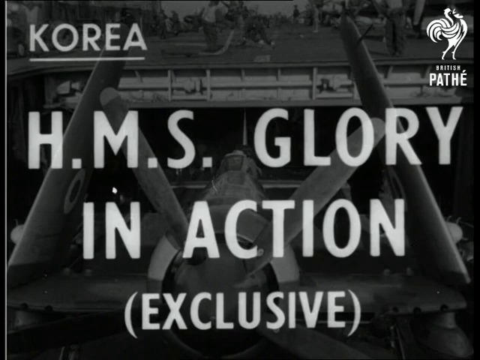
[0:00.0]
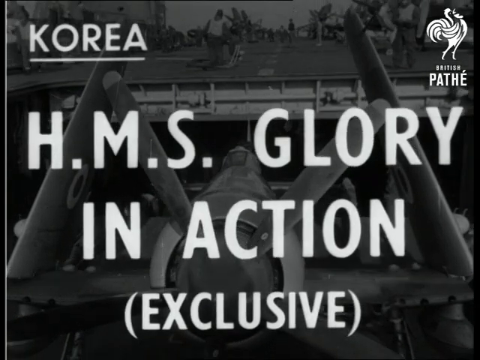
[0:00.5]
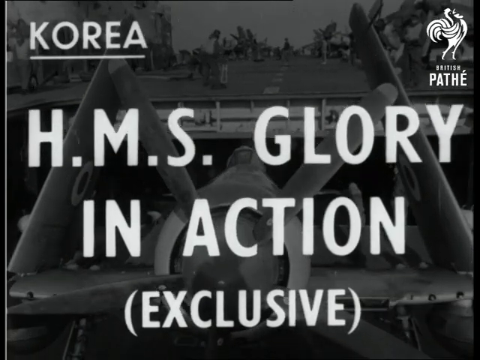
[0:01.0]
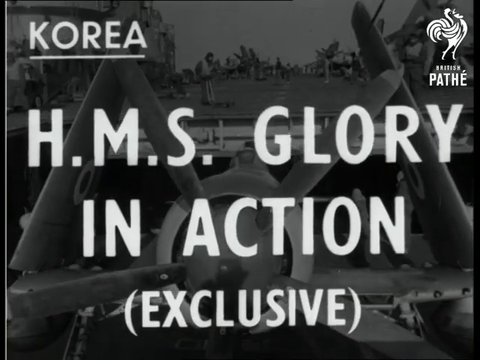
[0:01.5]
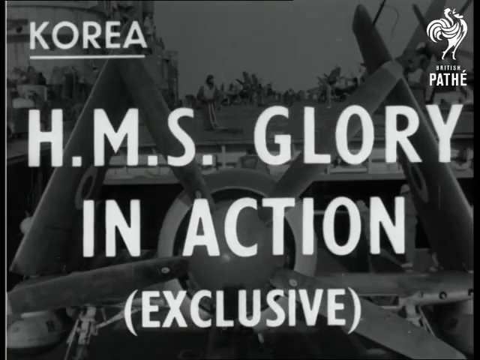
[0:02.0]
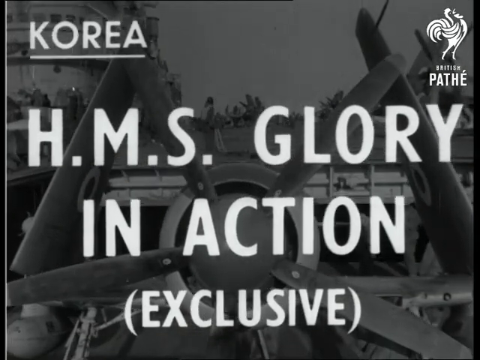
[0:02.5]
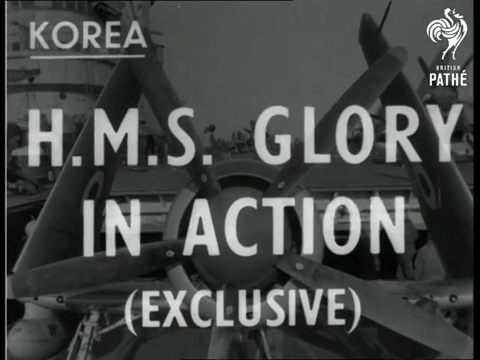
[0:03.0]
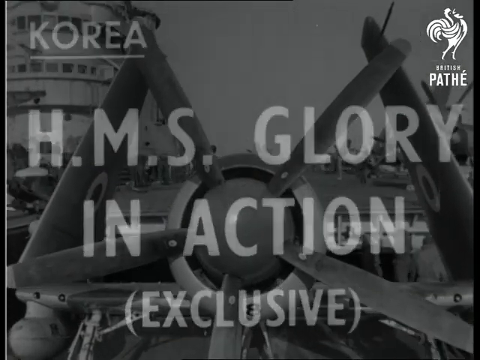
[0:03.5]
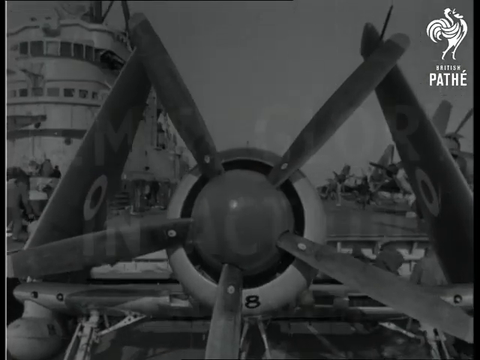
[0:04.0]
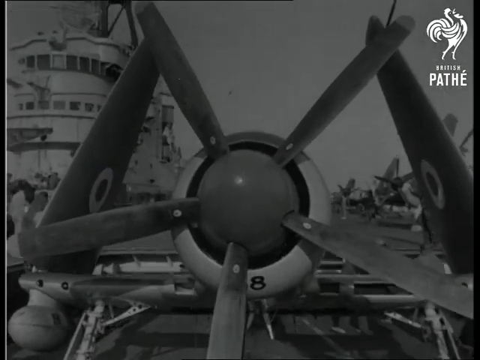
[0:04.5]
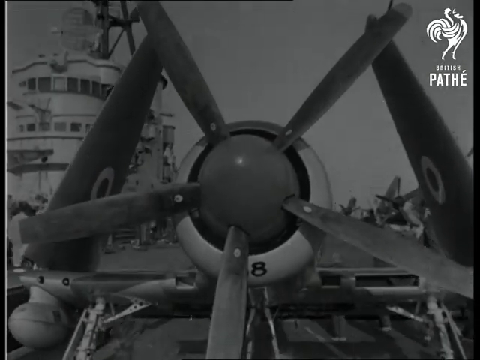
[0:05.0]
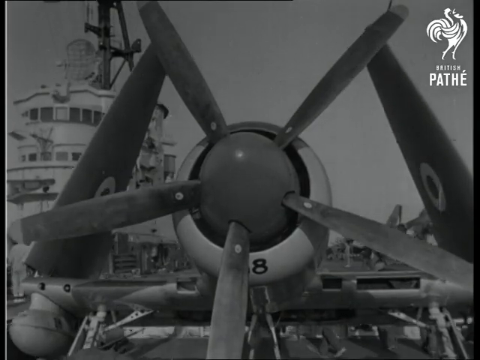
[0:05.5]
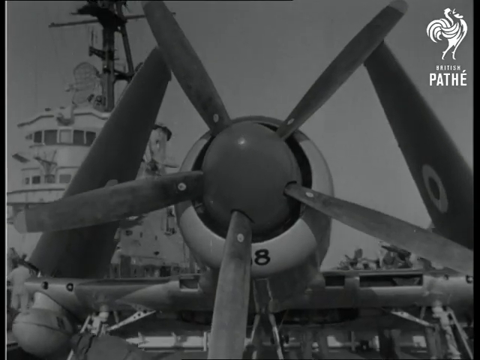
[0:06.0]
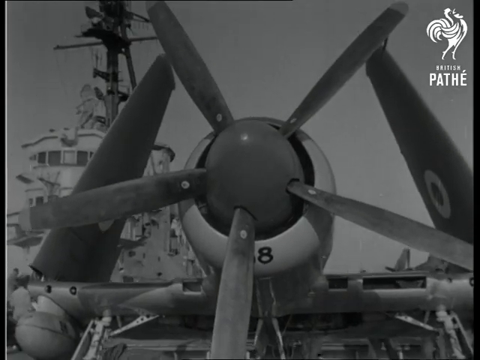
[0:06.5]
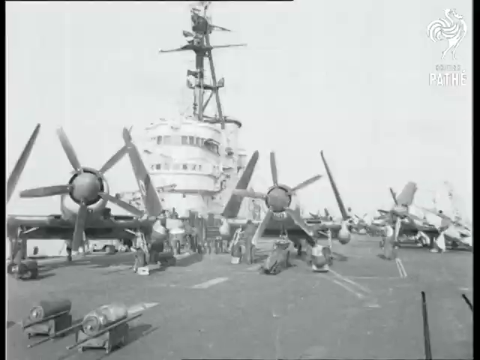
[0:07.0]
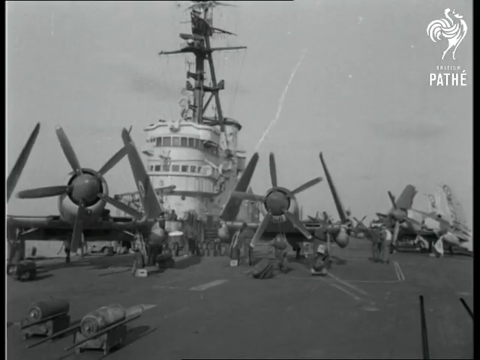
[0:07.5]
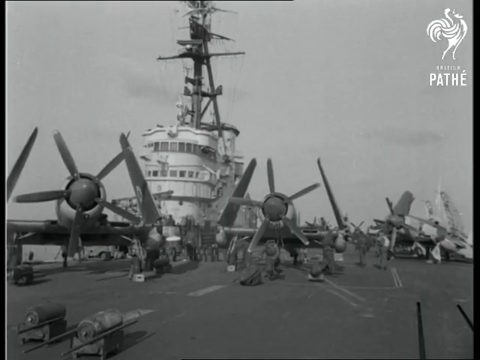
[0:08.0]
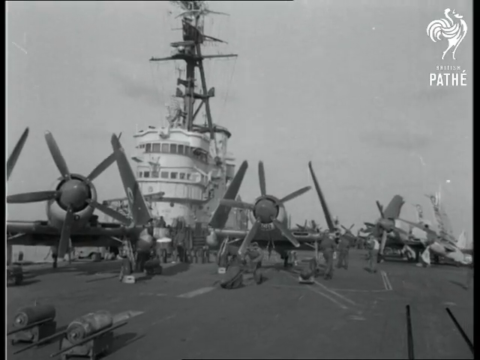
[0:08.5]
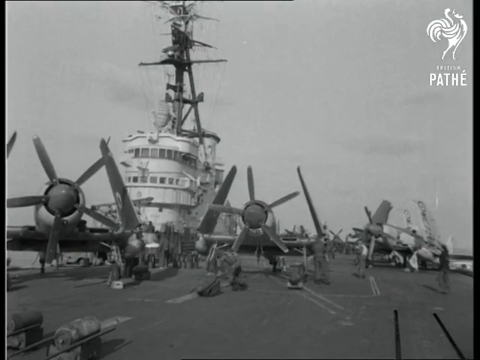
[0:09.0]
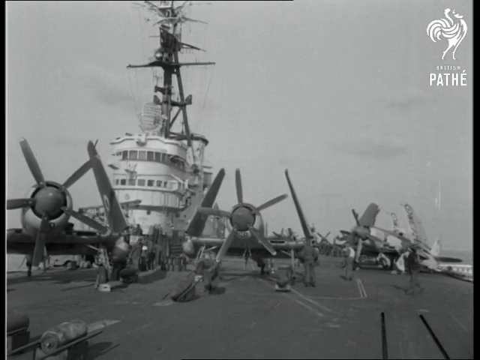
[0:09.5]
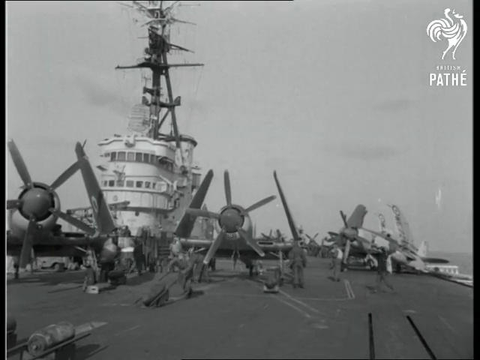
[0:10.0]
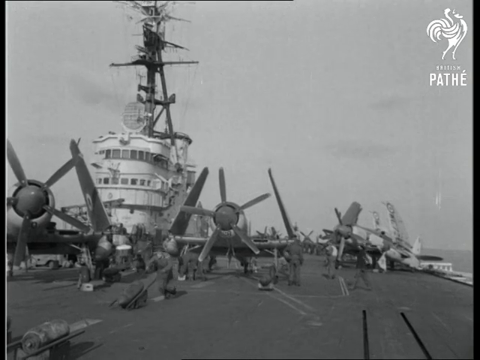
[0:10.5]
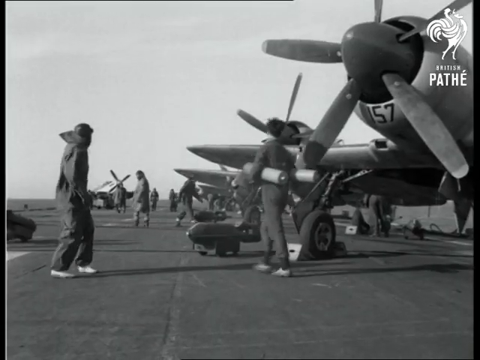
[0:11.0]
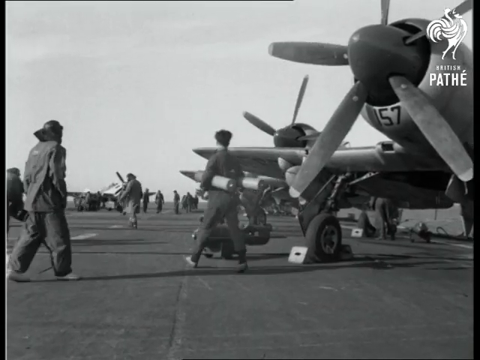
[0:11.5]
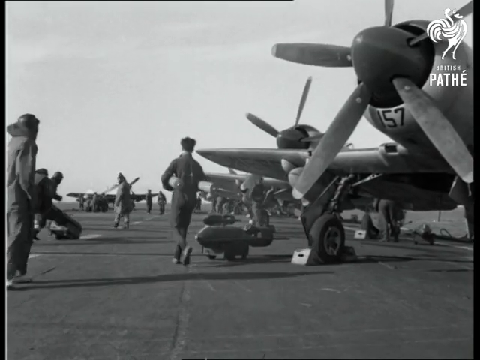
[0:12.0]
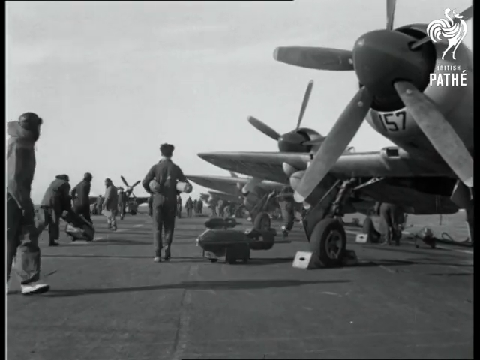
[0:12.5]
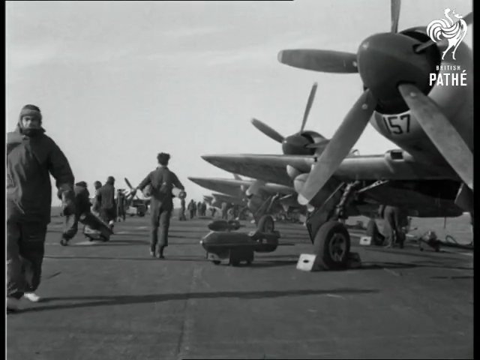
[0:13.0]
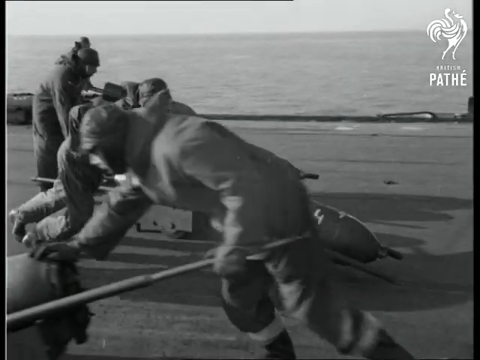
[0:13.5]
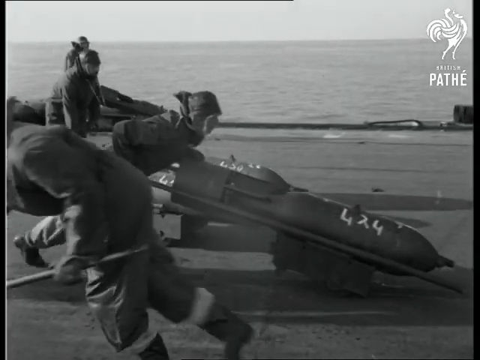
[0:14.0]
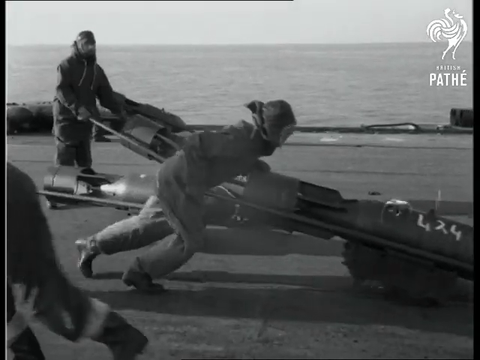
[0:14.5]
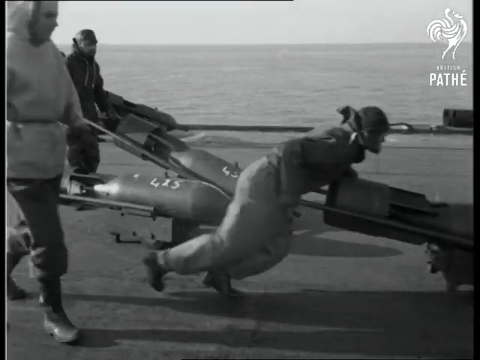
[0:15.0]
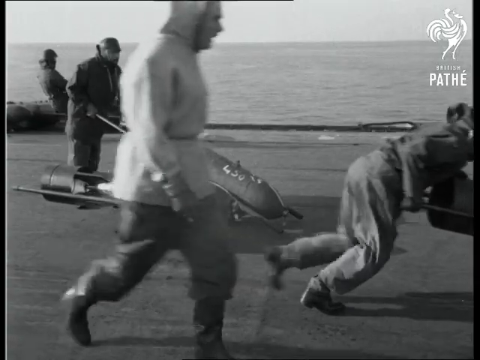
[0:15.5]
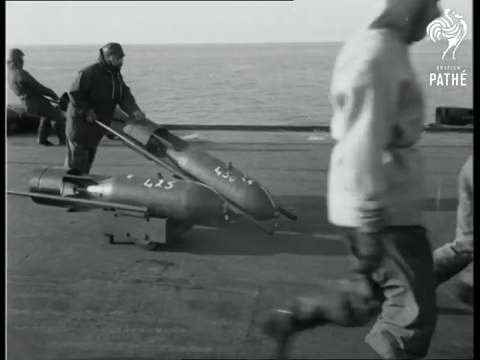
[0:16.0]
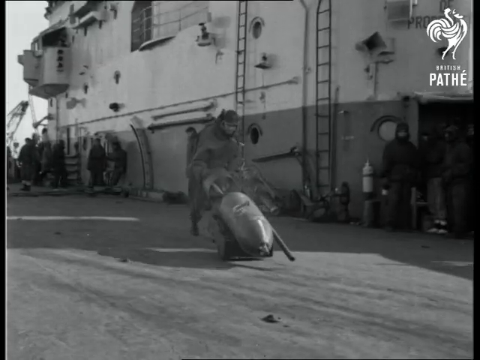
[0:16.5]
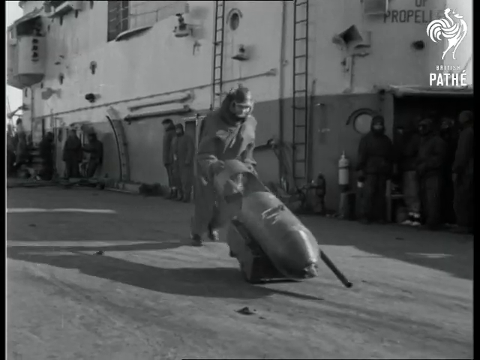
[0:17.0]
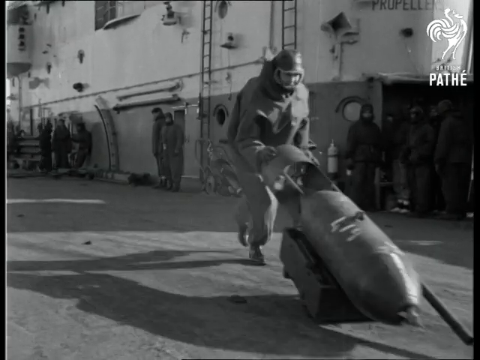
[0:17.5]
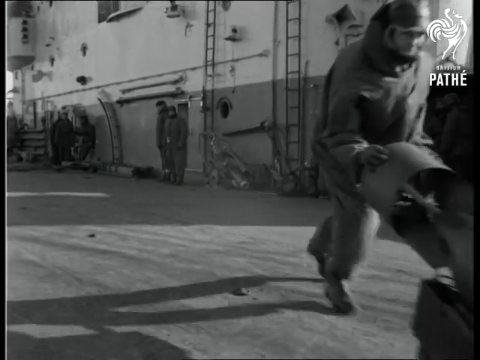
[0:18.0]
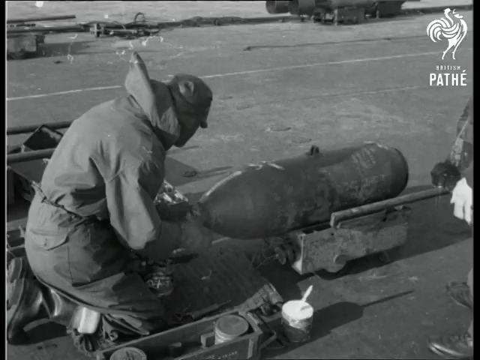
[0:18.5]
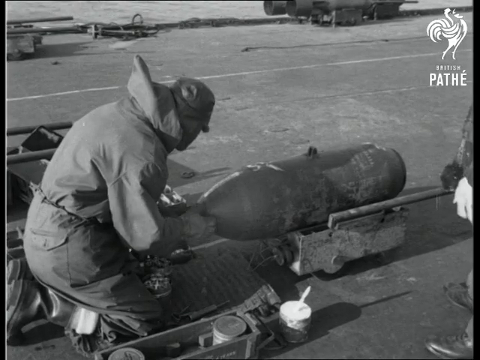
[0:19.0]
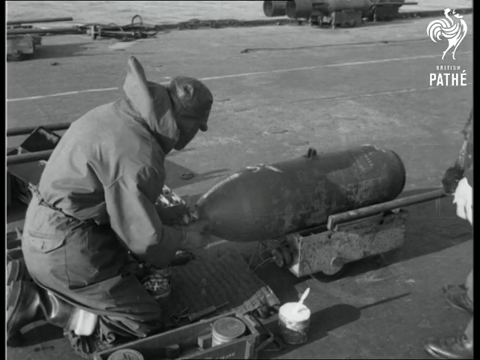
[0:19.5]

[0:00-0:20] The video opens with a title slide that reads "Korea" in the upper left, "British Pathé" in the upper right, and, in large print, "HMS Glory in action," with "exclusive" in parentheses. Next comes some sort of propeller airplane on a carrier; the camera moves back to show at least three planes on the deck of an aircraft carrier, apparently at sea. A large variety of Air Force personnel get the planes ready for flight and load them with bombs. The bombs are about three feet long, 18 inches high and 18 inches in diameter. Some of the bombs are much longer, almost the height of a grown man, and seem to have propellers in the back, suggesting they could possibly be dropped into the water as torpedoes. A man moves a bomb from left to right, and another man adjusts the warhead of a weapon on the deck.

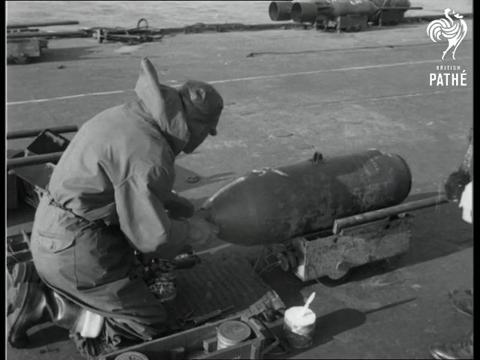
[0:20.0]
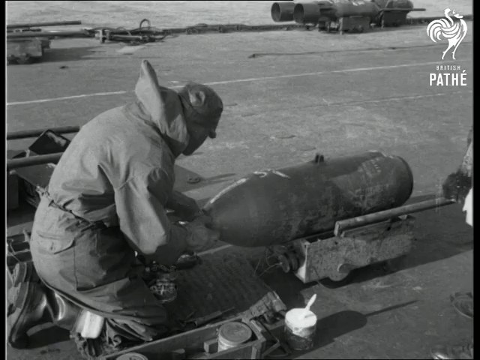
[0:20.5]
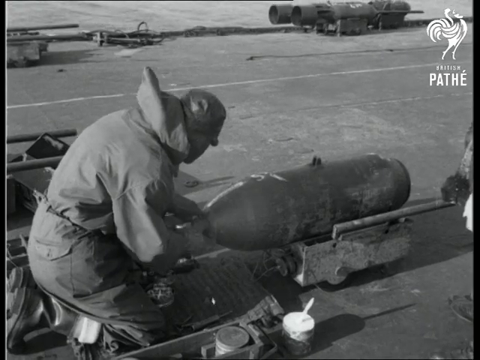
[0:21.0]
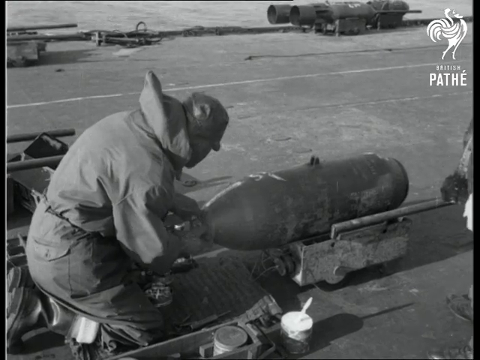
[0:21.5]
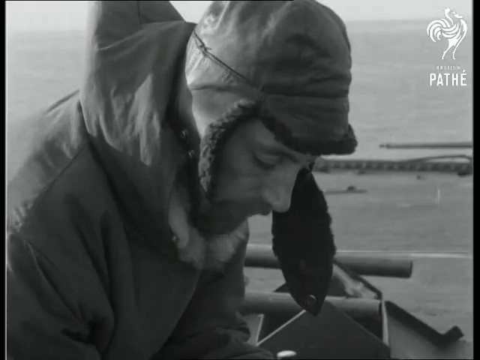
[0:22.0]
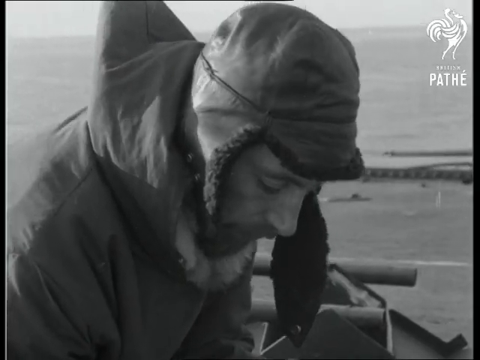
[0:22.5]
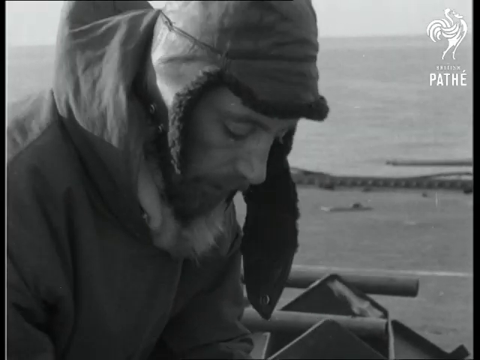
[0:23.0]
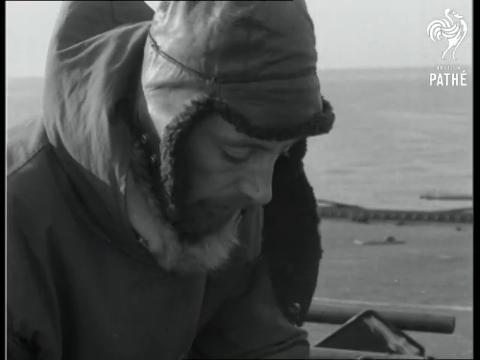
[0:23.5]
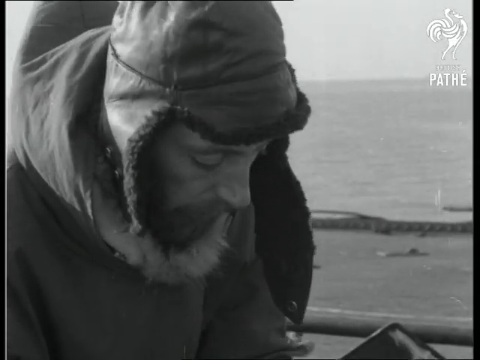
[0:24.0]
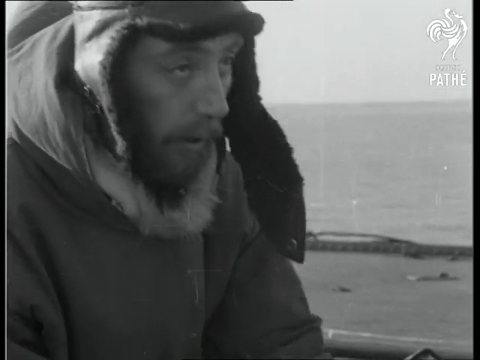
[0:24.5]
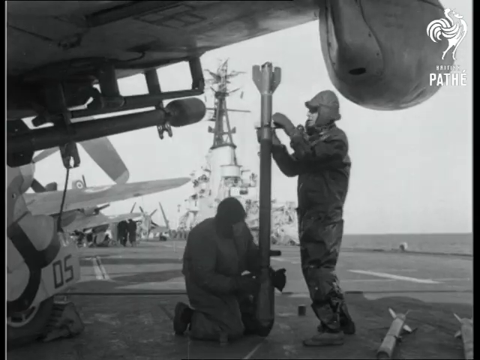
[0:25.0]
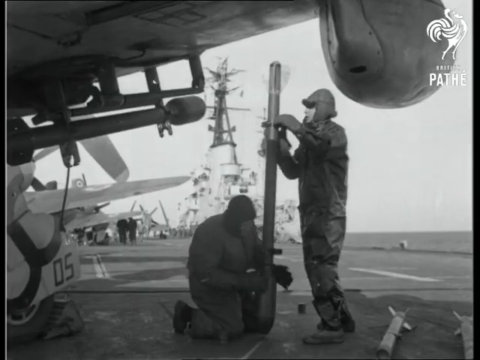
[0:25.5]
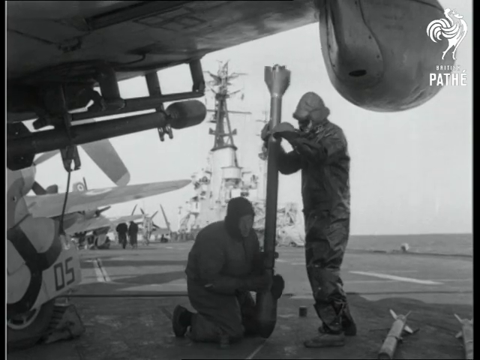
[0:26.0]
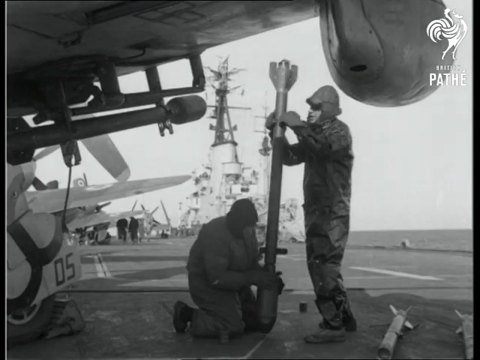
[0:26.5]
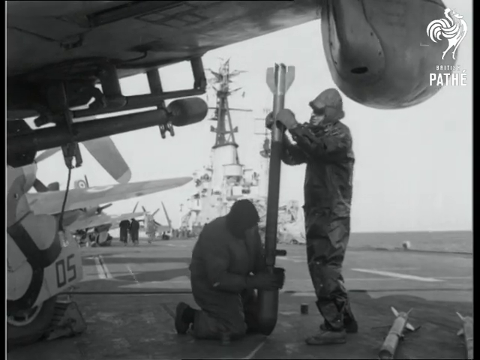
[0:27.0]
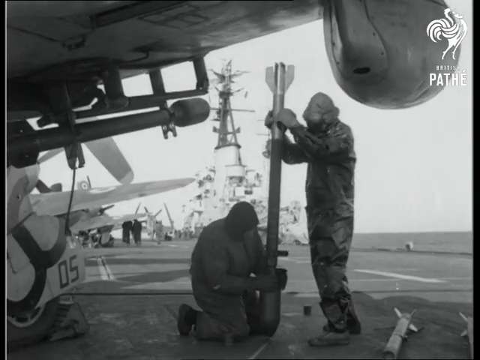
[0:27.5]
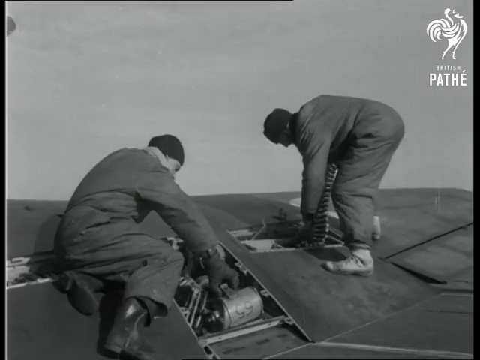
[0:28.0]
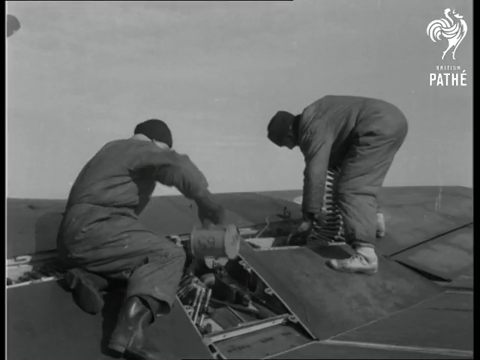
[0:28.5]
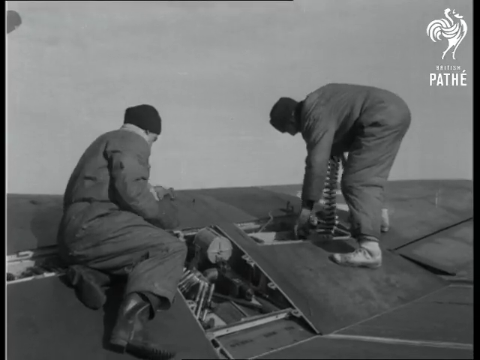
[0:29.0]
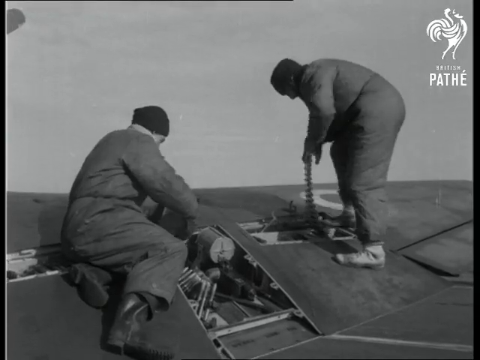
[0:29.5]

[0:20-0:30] The man adjusts the warhead of a snub-nosed bomb, perhaps a 500-pound bomb, about 4 feet by 2 feet with a diameter of about 19 inches. He wears a hat with flaps on both sides of his face and a hood with a fur-lined collar. He has a goatee and looks calm. Then two men, one wearing a mask of some kind, adjust a very long weapon with fins, about 8 feet long and 4 to 5 inches in diameter. One man, crouched on the left, screws on the warhead, while the other, standing on the right, holds the bomb steady as they work.